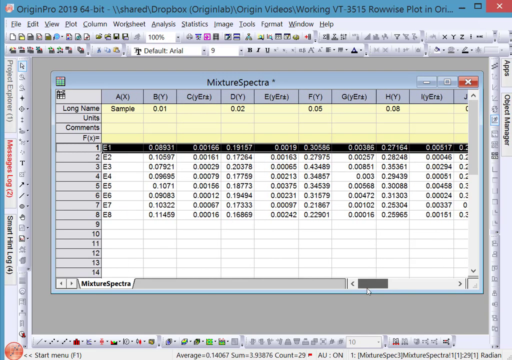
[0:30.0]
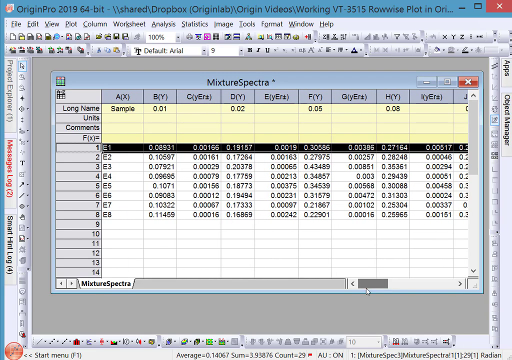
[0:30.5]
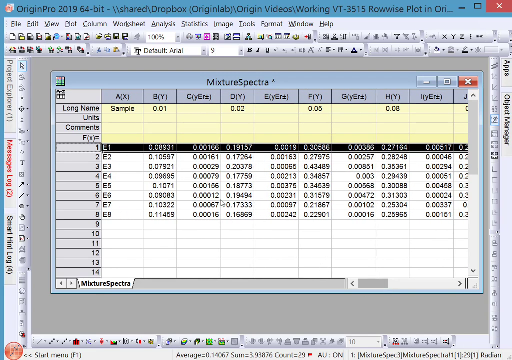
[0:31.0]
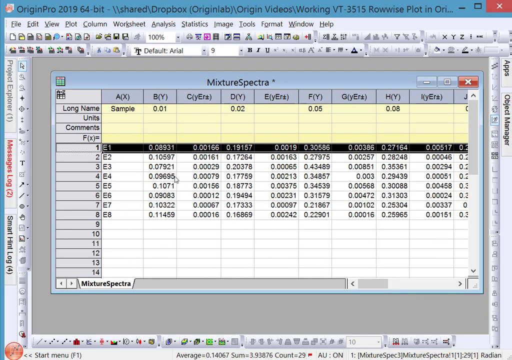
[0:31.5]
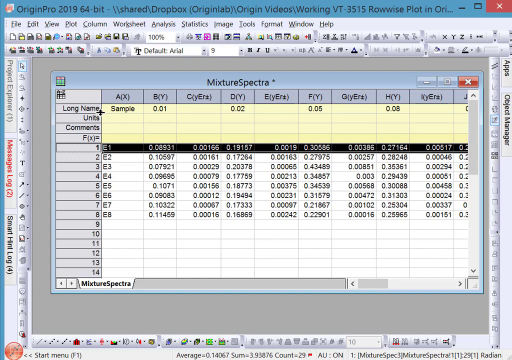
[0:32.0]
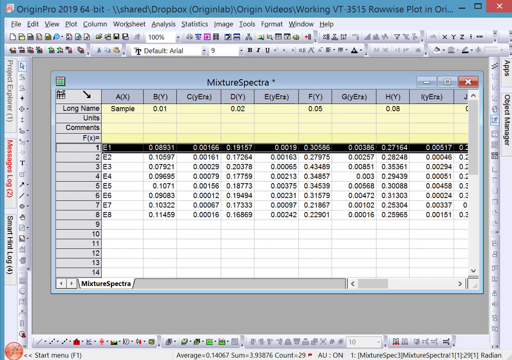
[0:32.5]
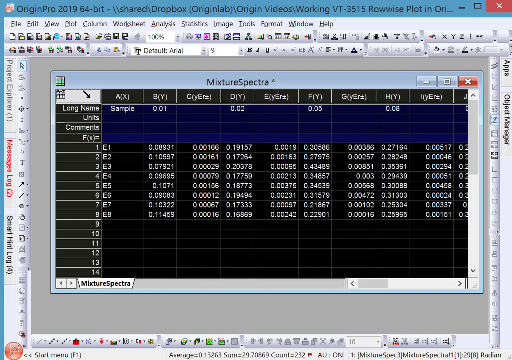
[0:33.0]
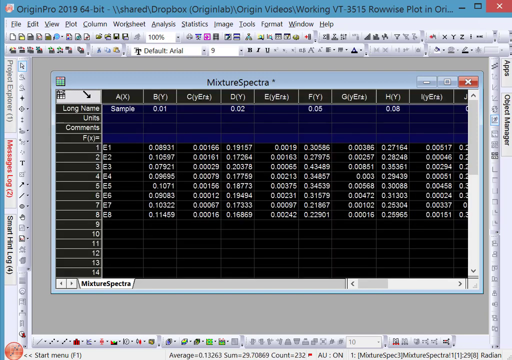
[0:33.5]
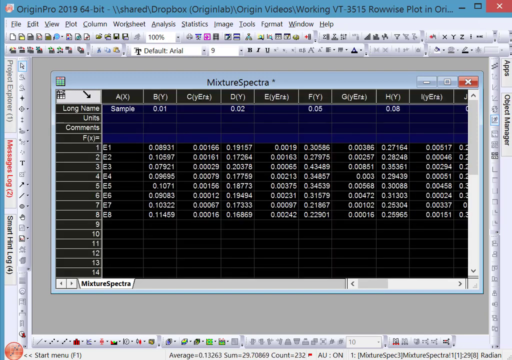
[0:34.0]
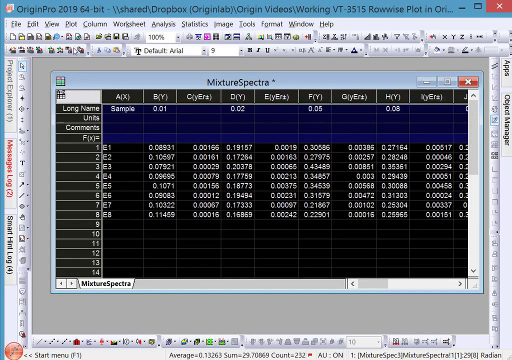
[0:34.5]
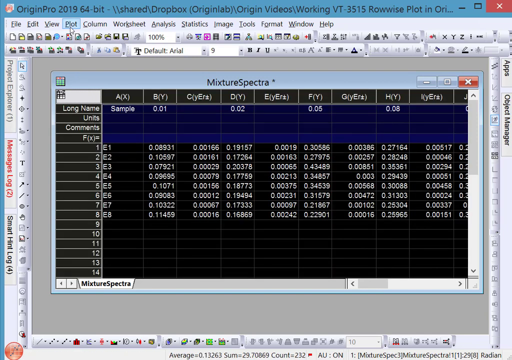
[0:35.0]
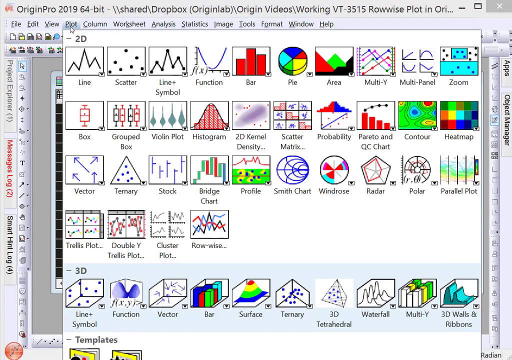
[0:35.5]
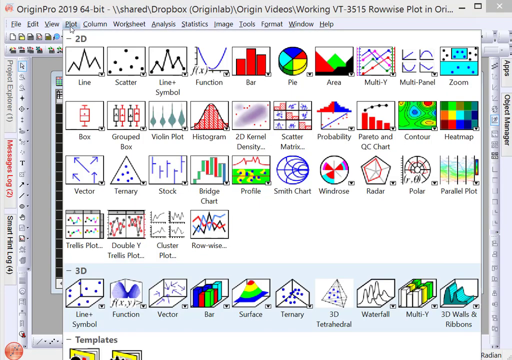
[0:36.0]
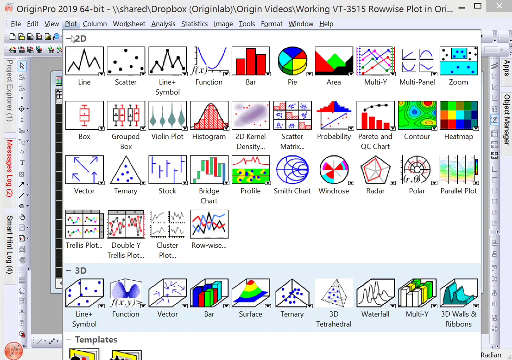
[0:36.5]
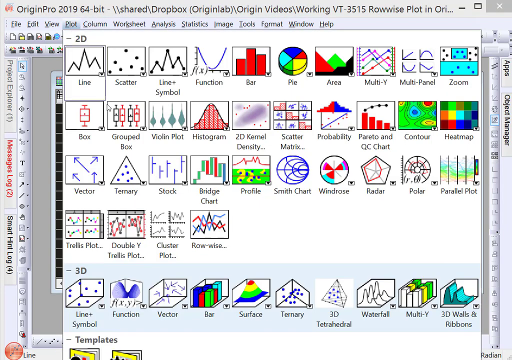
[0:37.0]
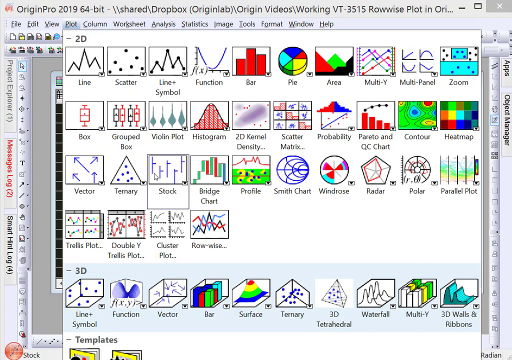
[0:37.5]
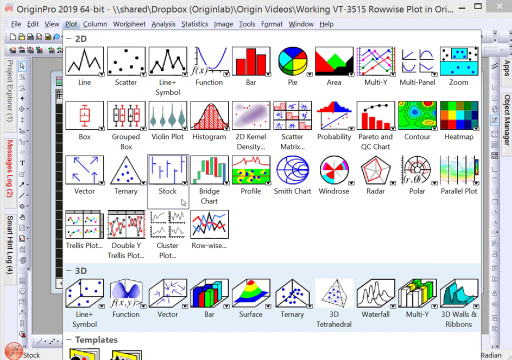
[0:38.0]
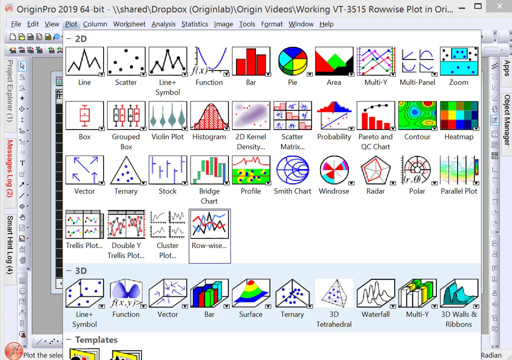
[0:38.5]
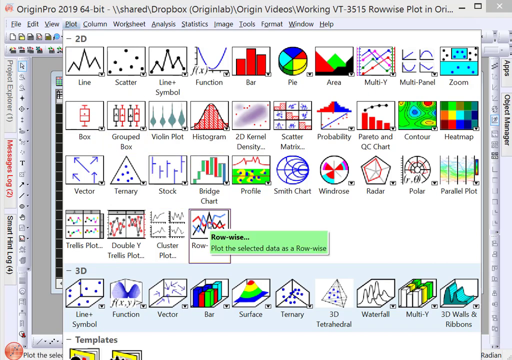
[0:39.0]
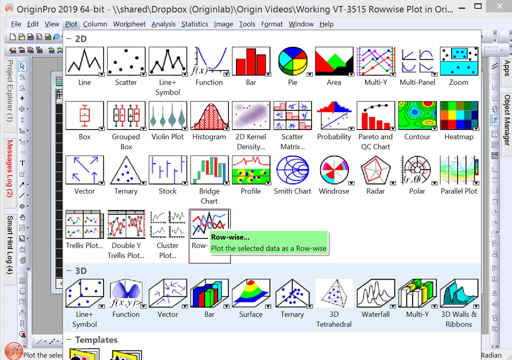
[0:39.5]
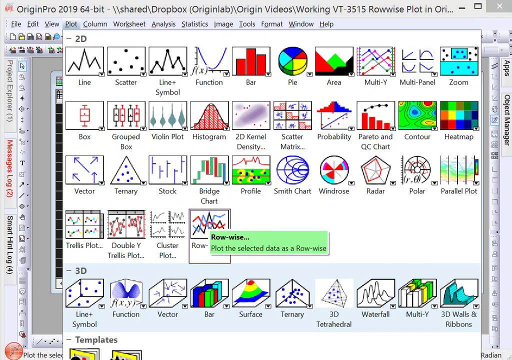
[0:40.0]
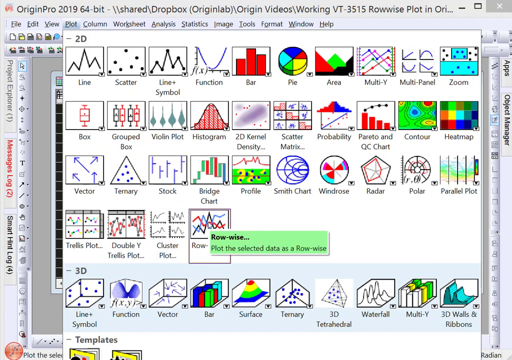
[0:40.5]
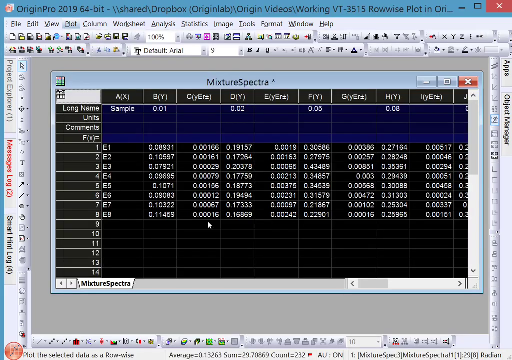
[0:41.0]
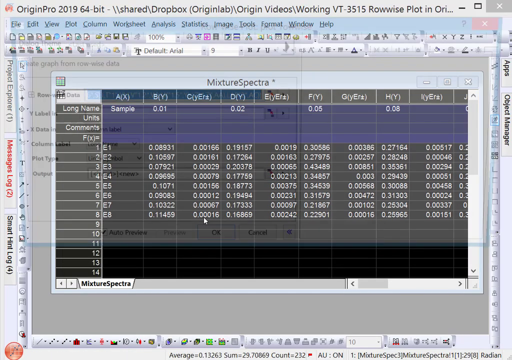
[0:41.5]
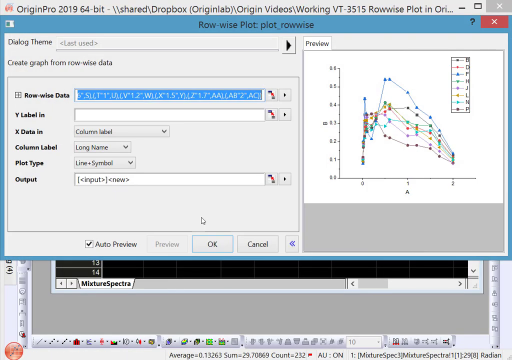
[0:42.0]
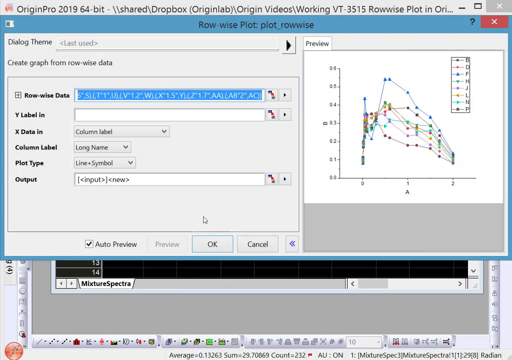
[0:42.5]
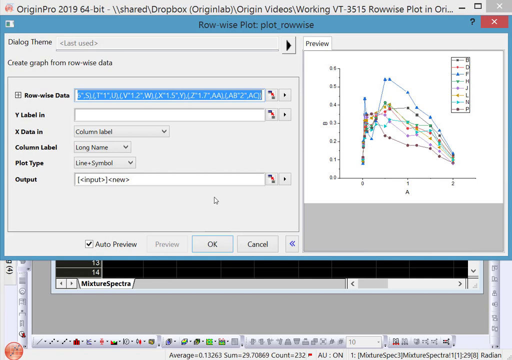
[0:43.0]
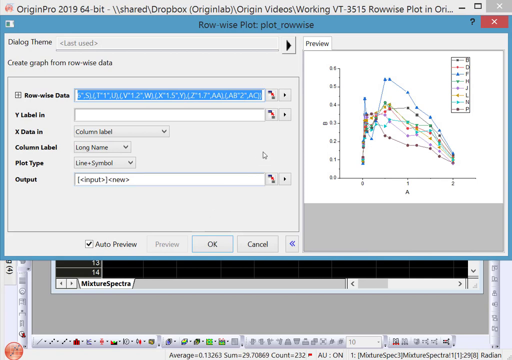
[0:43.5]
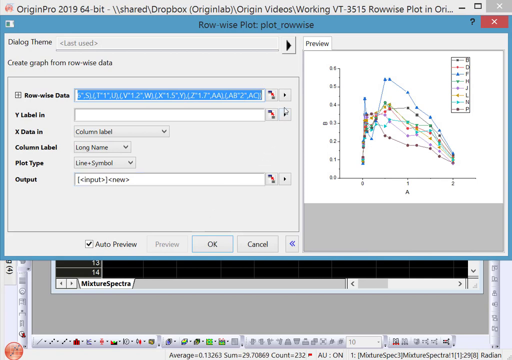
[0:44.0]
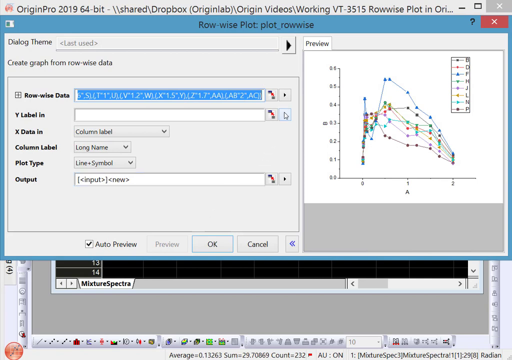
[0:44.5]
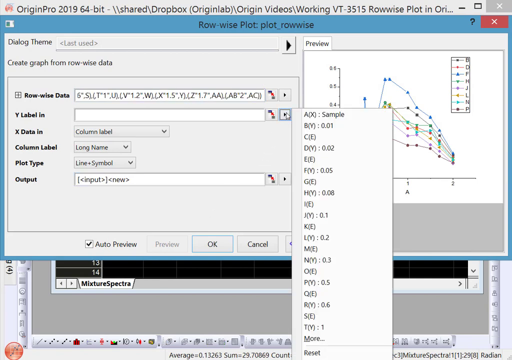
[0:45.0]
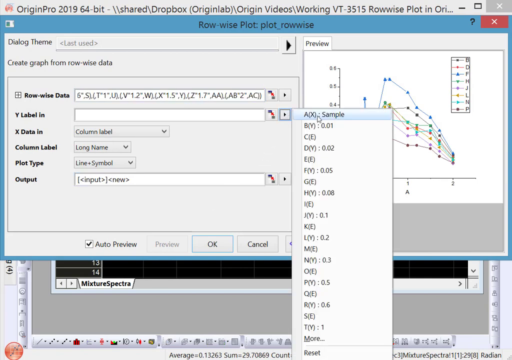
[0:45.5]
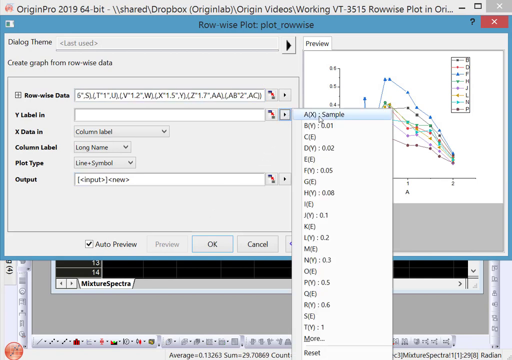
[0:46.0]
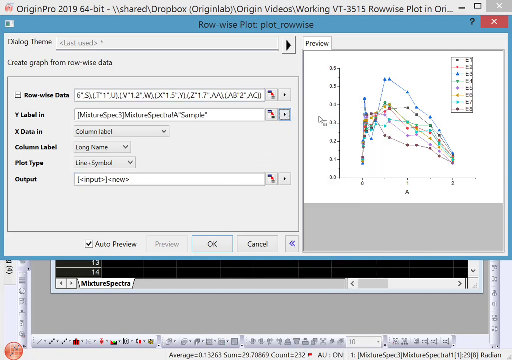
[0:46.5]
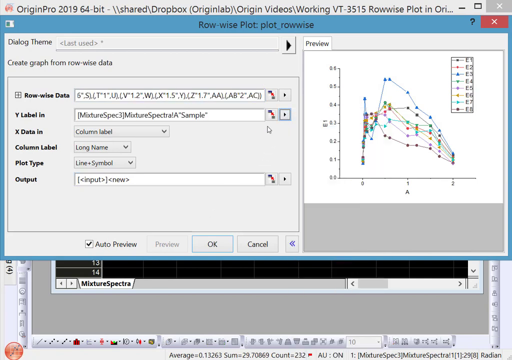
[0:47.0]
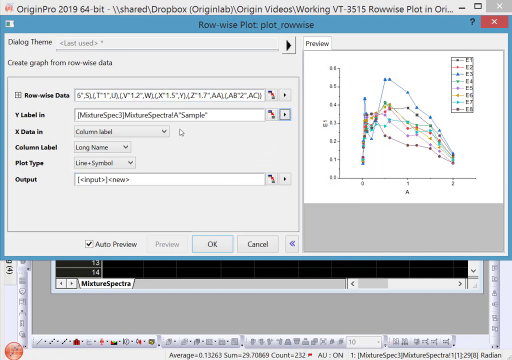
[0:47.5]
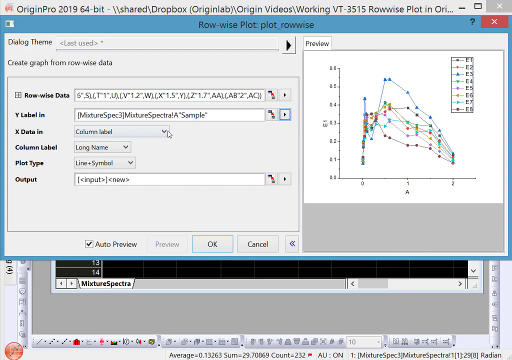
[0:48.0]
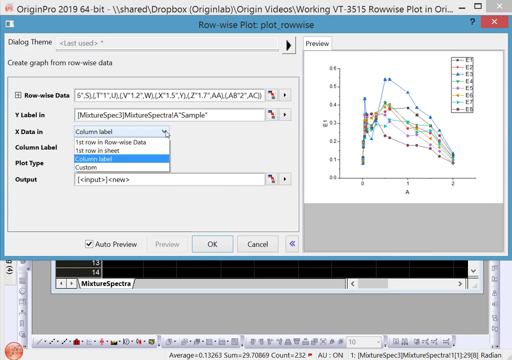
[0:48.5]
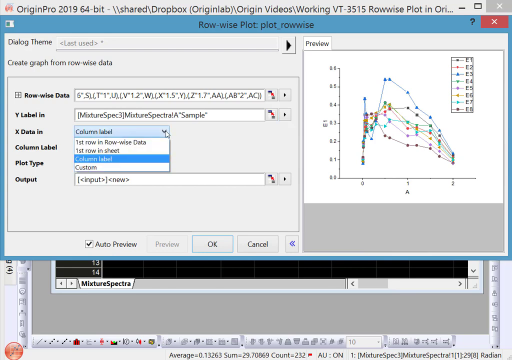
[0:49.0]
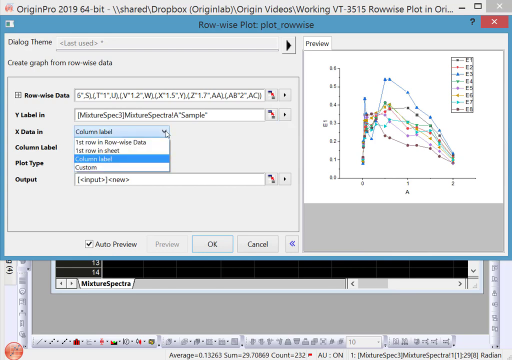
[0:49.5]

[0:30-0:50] The fourth row of a spreadsheet in Origin Pro is highlighted. It is titled '1' and is highlighted in black, with the numbers inside showing white instead of black. The cursor moves from a scroll bar at the bottom right of the screen diagonally upwards to the left and into a grey box in the top left of the spreadsheet, where it changes to a black diagonal downward arrow and highlights the entire table in black, blue and grey, with all the text now white. The cursor then moves up and selects a 'plot' tab at the top of the screen, opening a menu titled '2D'. It moves diagonally down and hovers over an option named 'row-wise', described as plotting the selected data row-wise. Selecting this option brings up a pop-up titled 'row-wise plot plot_row-wise'. The cursor moves up, clicks a black arrow next to a text box titled 'Y Label In' and selects an option called 'A00 Sample'. It then moves back to the left and clicks a drop-down menu currently set to 'Column Label'.